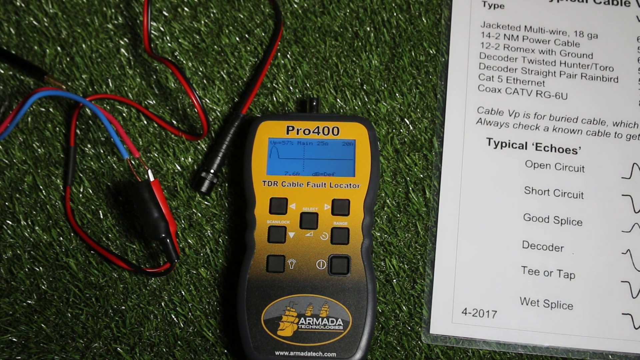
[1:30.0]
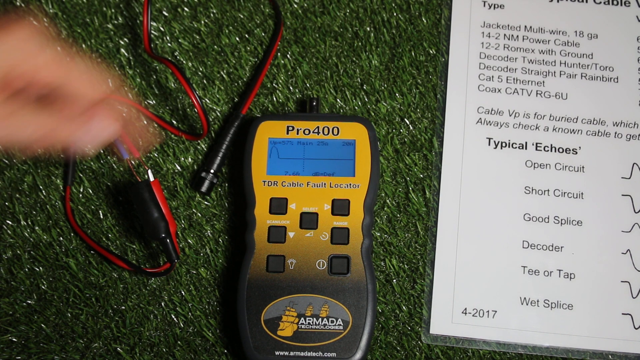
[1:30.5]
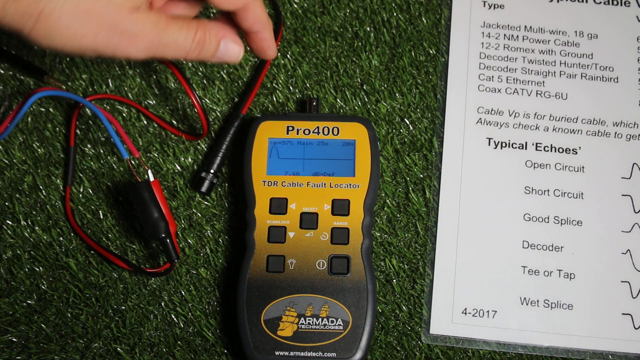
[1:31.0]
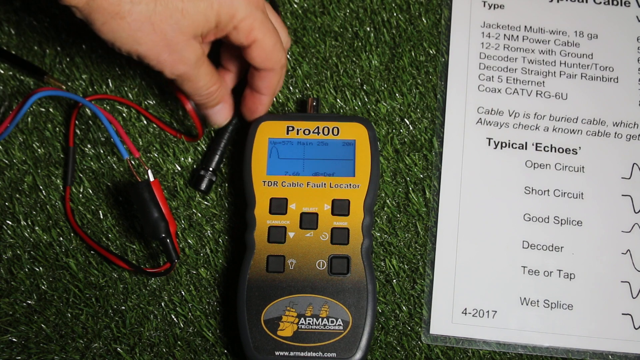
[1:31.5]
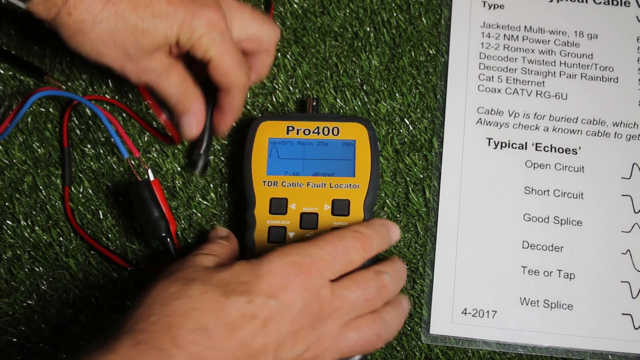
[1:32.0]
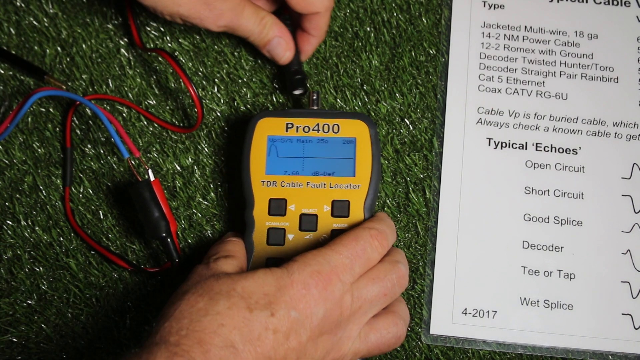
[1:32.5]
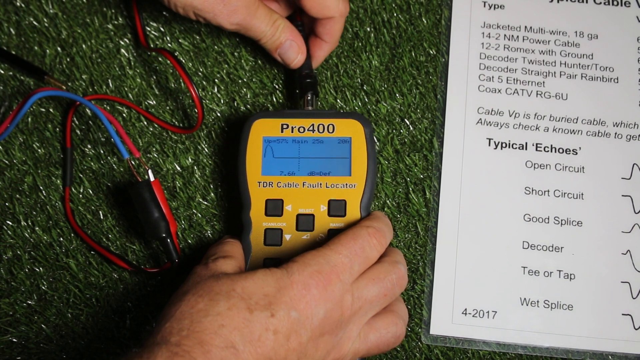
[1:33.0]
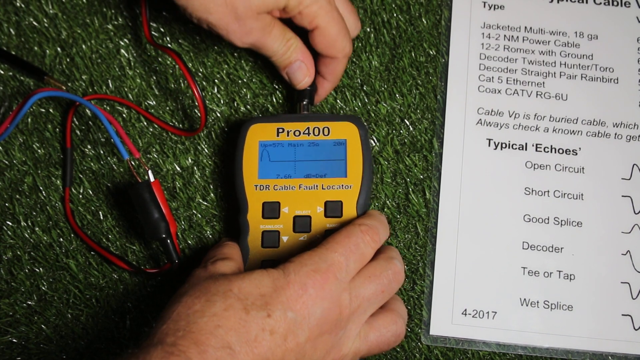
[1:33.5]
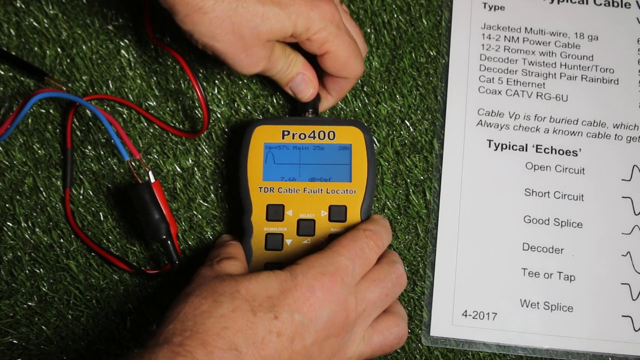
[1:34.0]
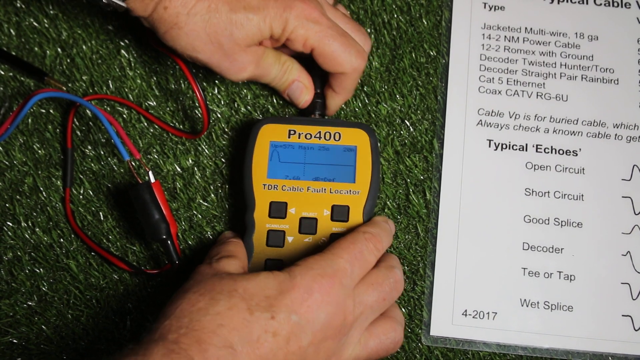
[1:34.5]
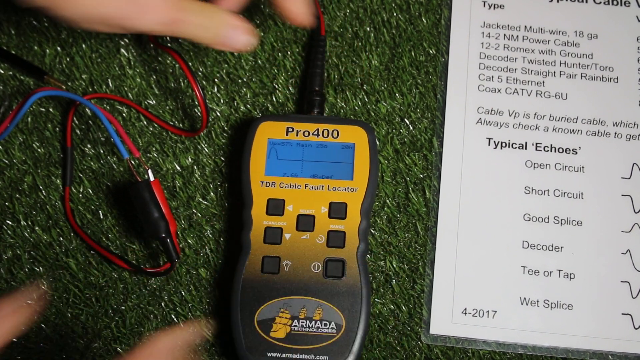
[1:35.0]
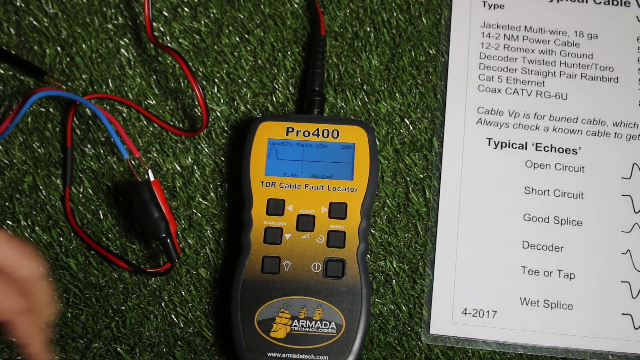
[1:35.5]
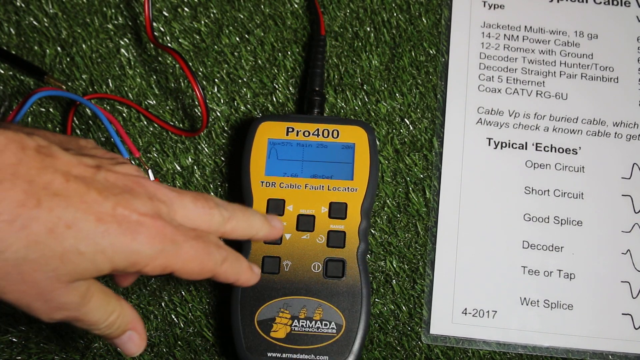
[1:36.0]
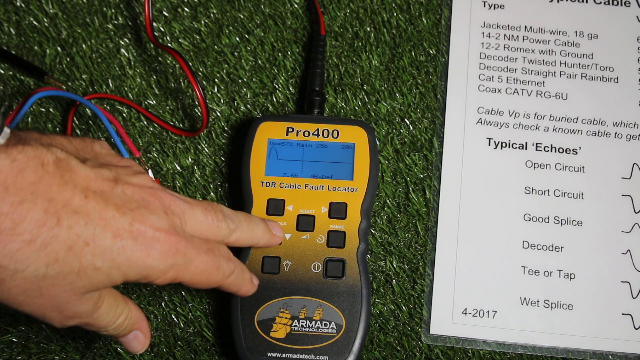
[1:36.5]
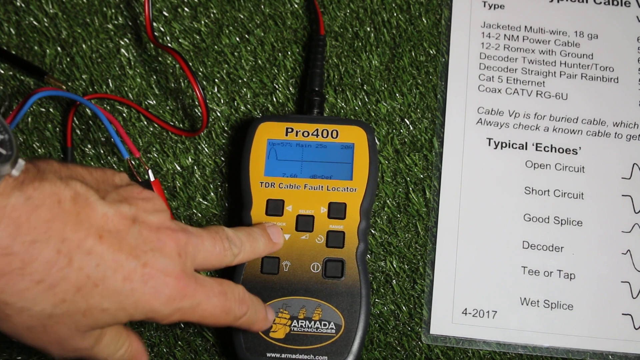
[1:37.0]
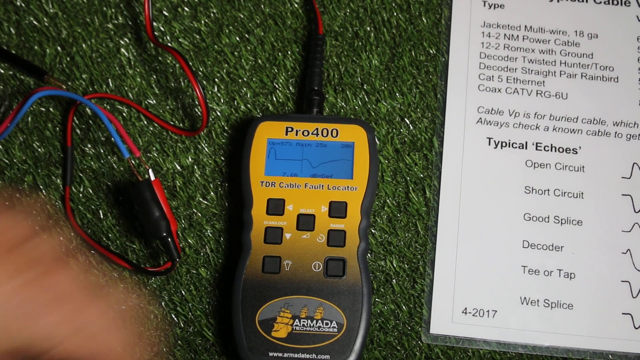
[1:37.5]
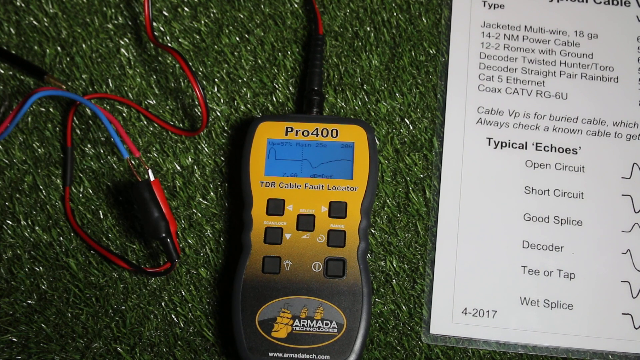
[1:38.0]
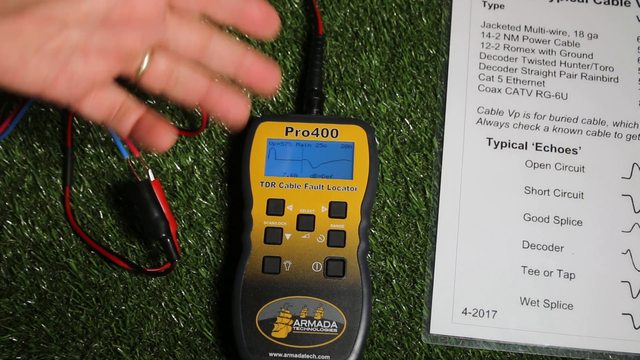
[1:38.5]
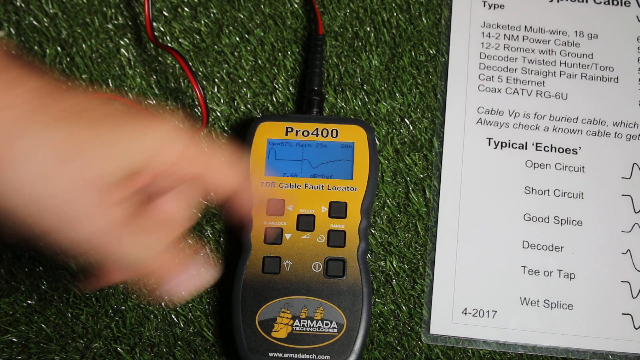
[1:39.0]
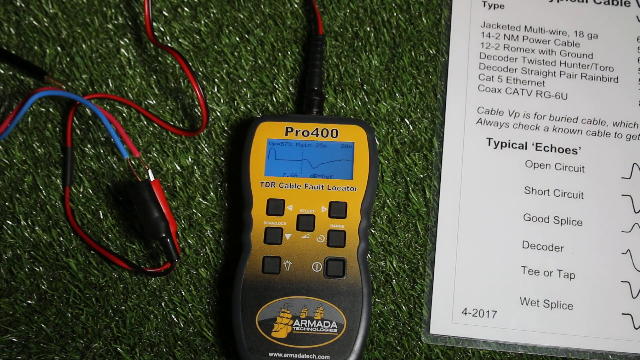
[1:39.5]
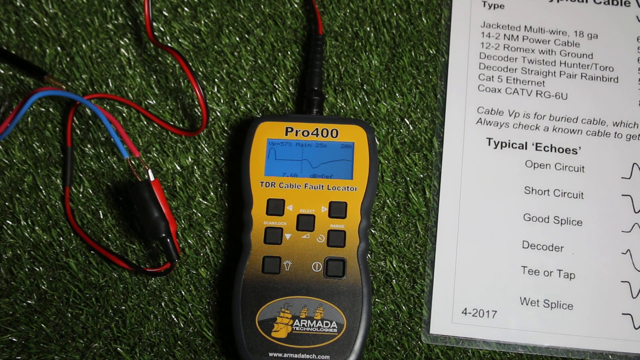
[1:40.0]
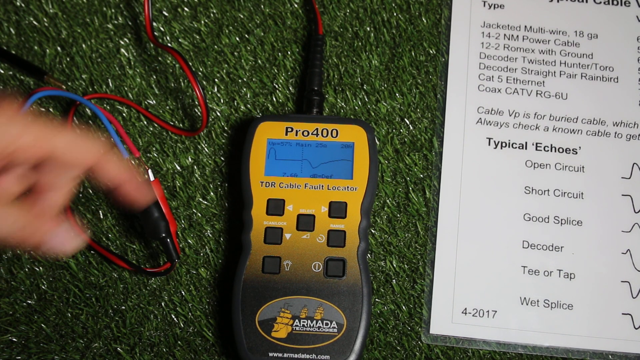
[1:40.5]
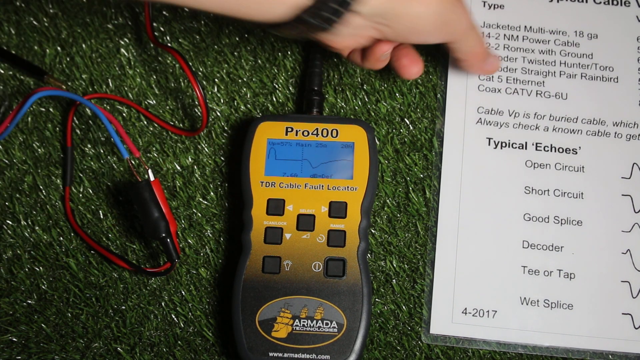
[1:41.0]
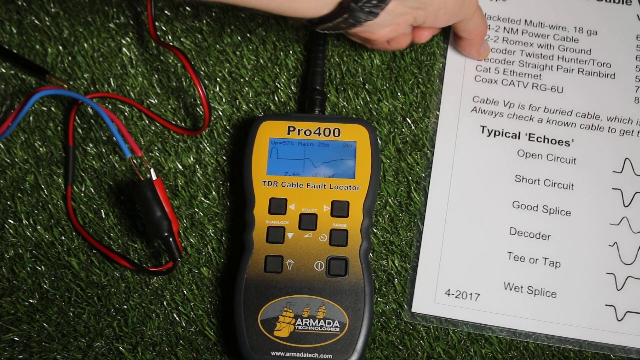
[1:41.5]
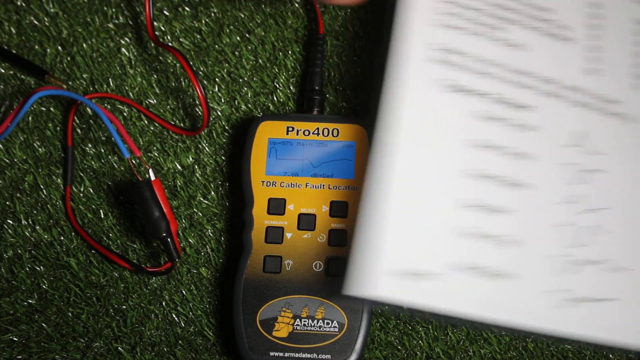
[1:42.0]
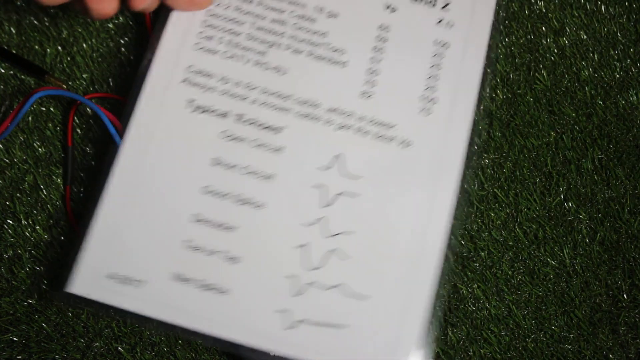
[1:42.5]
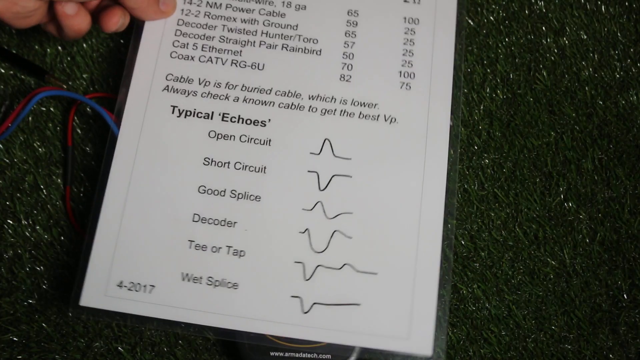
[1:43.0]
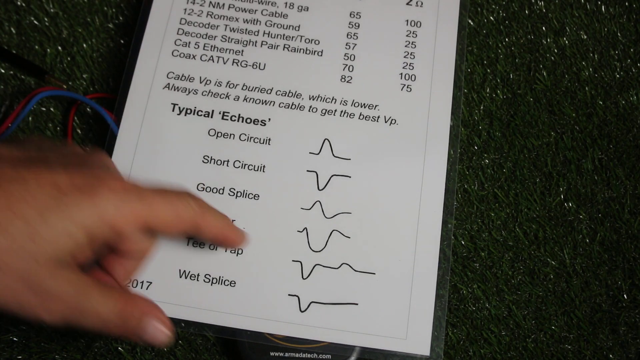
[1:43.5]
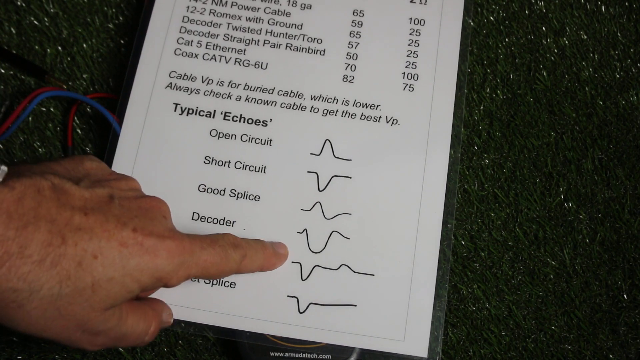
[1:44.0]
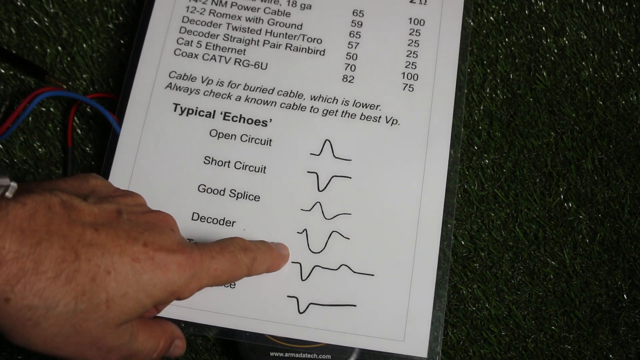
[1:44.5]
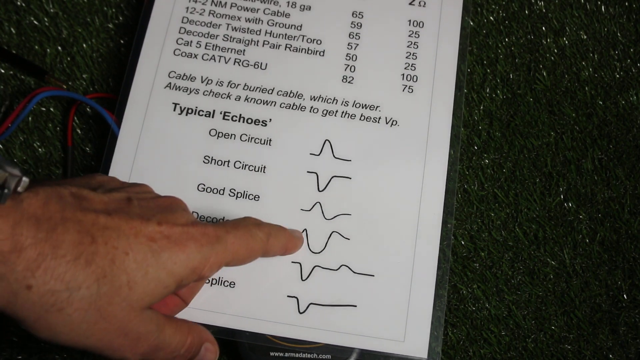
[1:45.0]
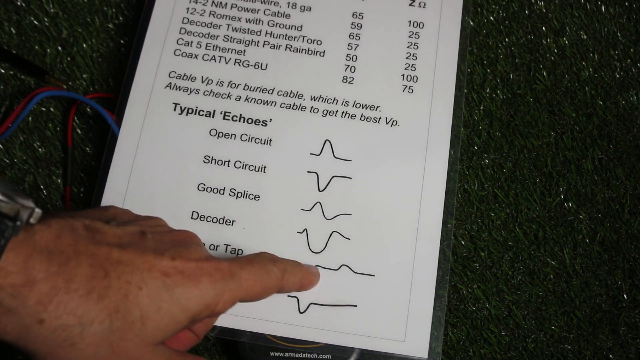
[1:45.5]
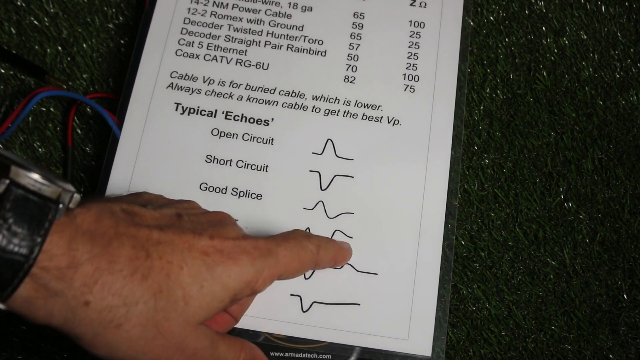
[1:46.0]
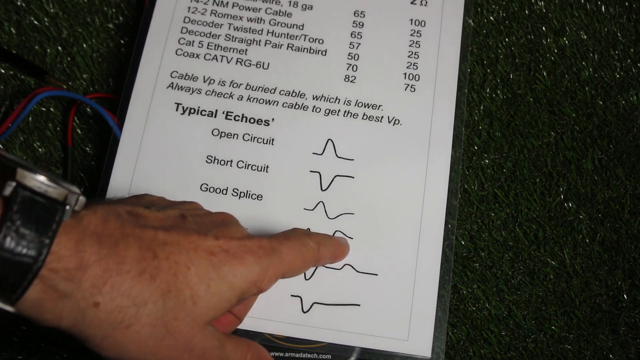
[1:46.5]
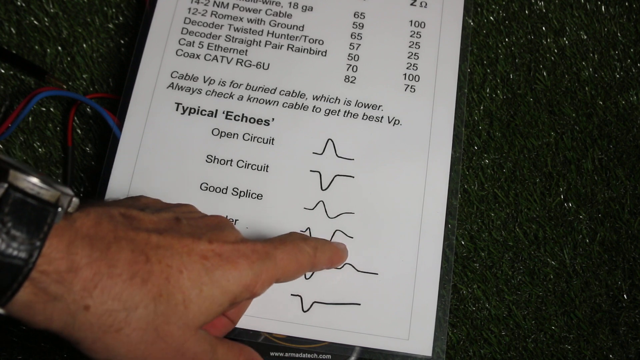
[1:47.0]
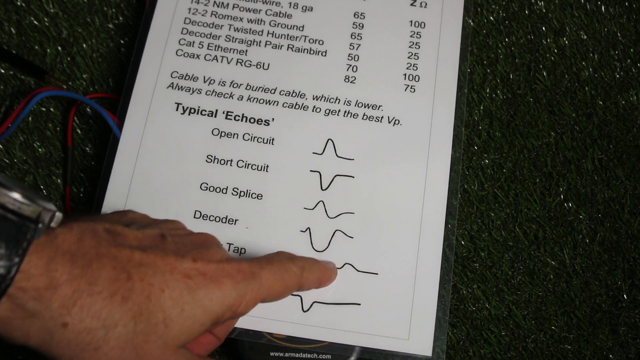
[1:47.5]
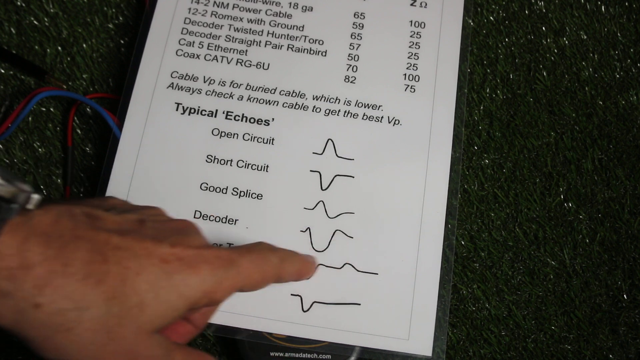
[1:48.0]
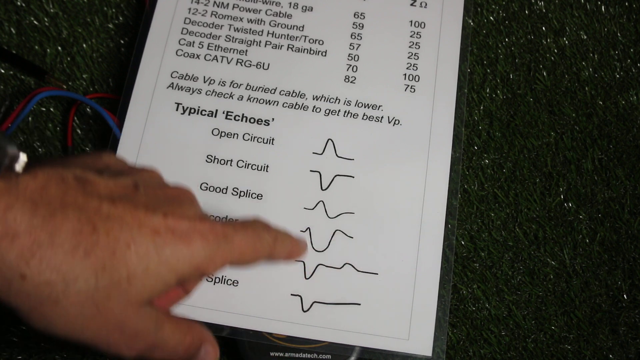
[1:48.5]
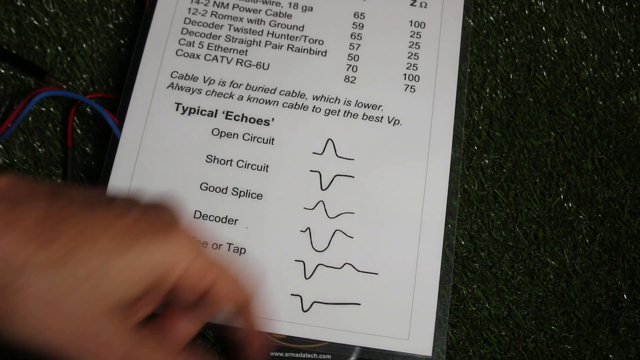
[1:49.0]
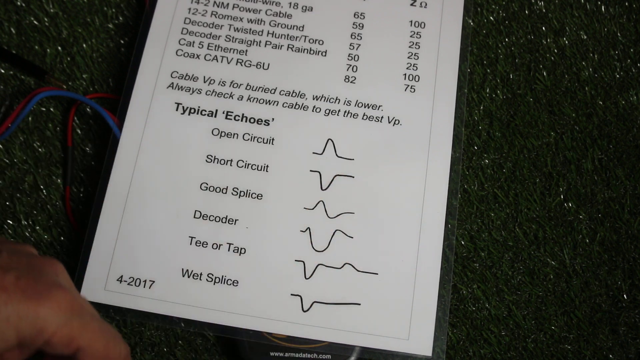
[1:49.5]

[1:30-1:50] A yellow Pro 400 device is shown. A man's hand reaches in and connects the blue and red wires to the top, holding the device with his right hand while connecting with his left. He wears a black watch band with a big watch face. Next to the device is a piece of paper listing "typical echoes", such as "open circuit", "short circuit", "good splice", "decoder" and "T or tap", with illustrations of each one. Once he connects the device, his hands are no longer seen. He pushes some of the black buttons, specifically the second one down on the left, and a reading appears on the screen, such as a jagged line. He references it to the white piece of paper.